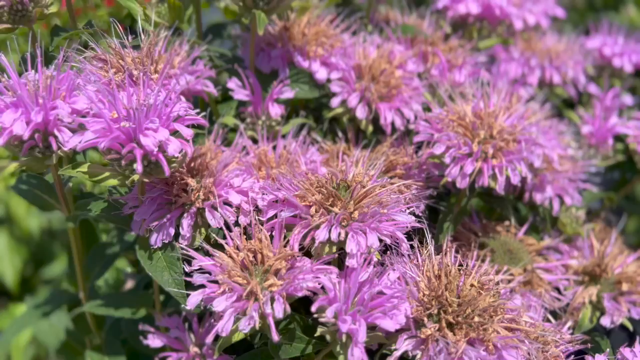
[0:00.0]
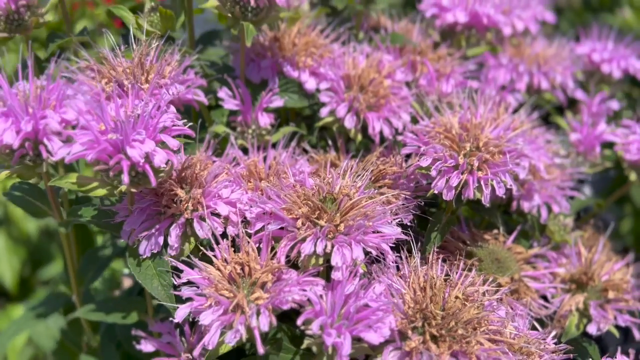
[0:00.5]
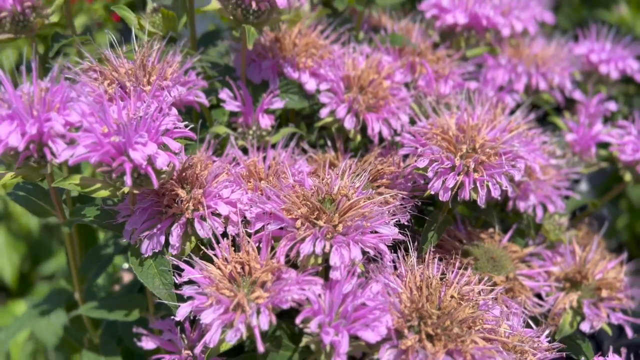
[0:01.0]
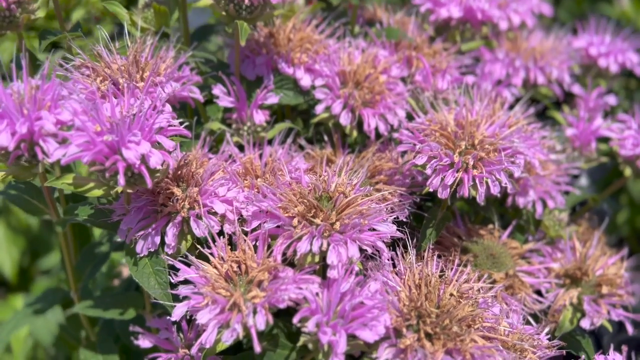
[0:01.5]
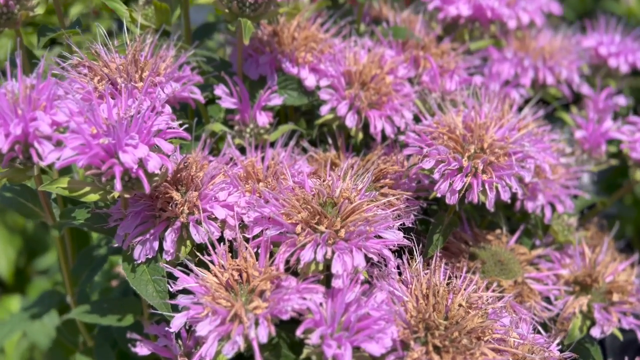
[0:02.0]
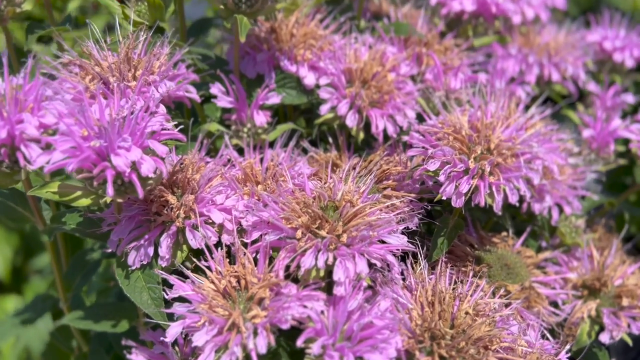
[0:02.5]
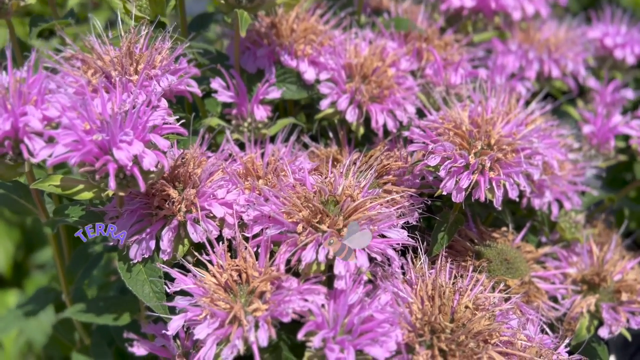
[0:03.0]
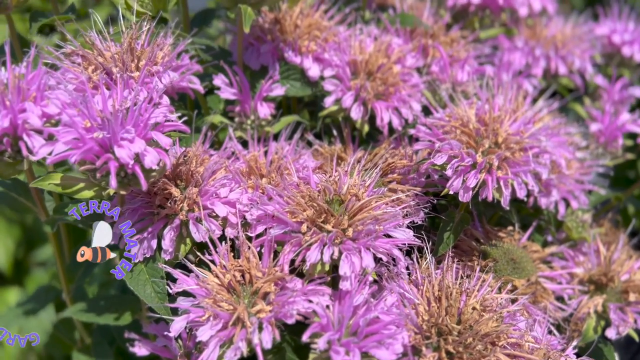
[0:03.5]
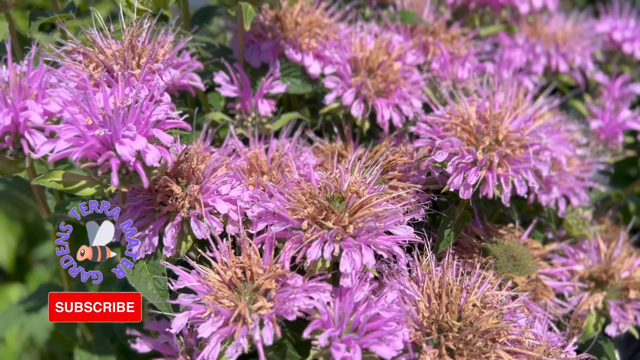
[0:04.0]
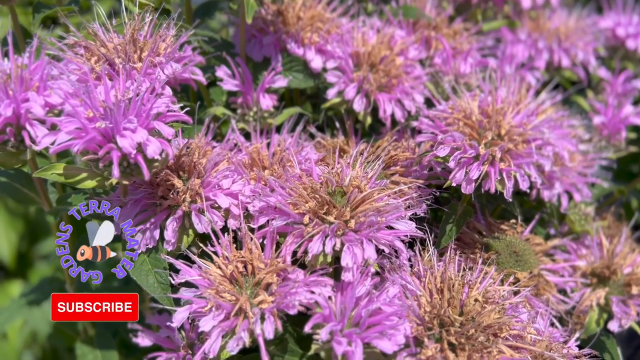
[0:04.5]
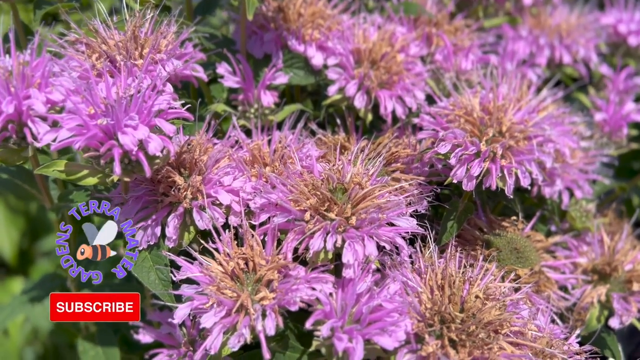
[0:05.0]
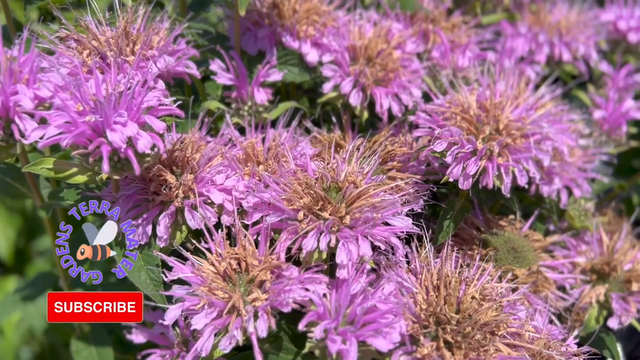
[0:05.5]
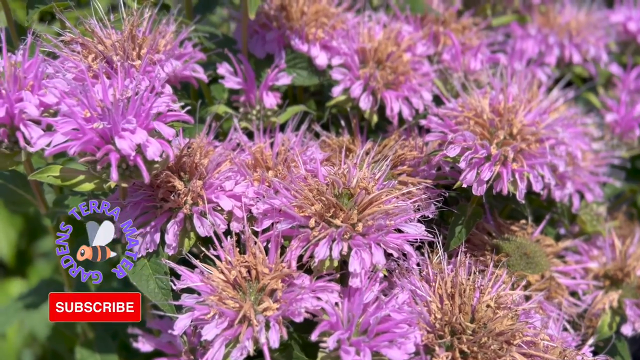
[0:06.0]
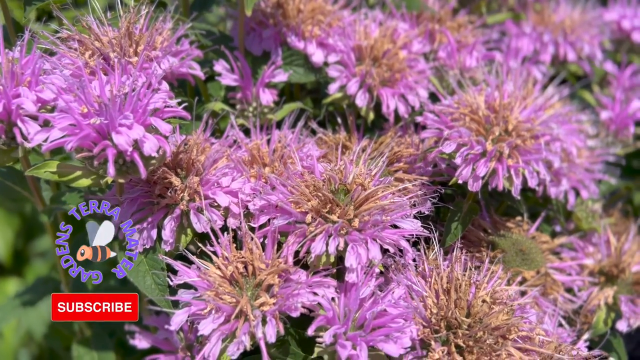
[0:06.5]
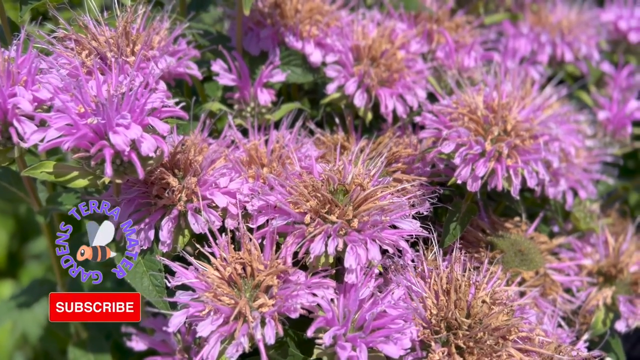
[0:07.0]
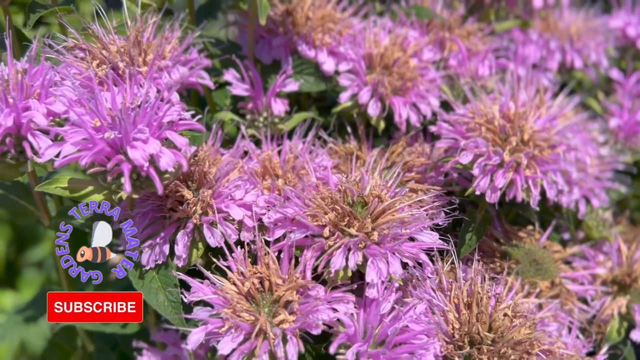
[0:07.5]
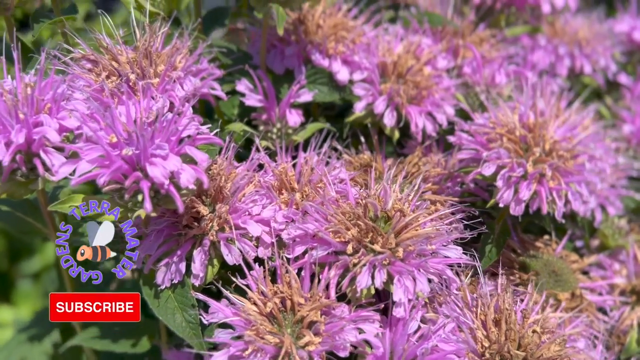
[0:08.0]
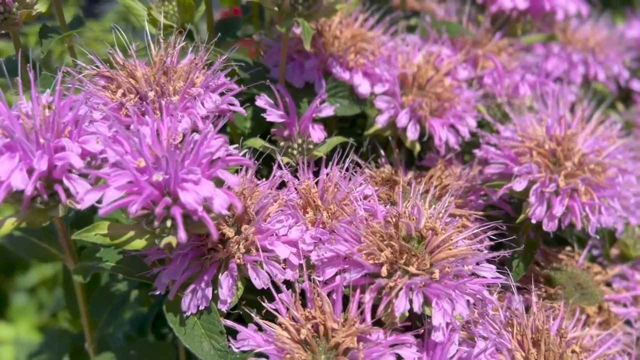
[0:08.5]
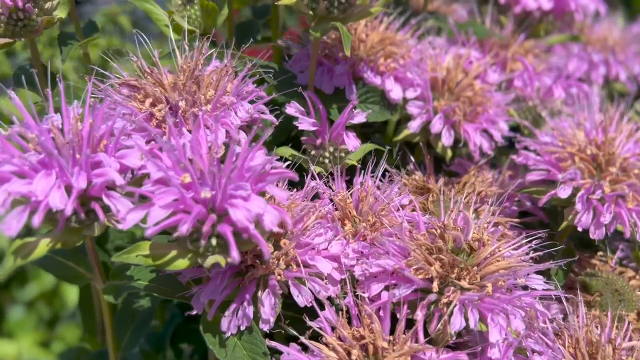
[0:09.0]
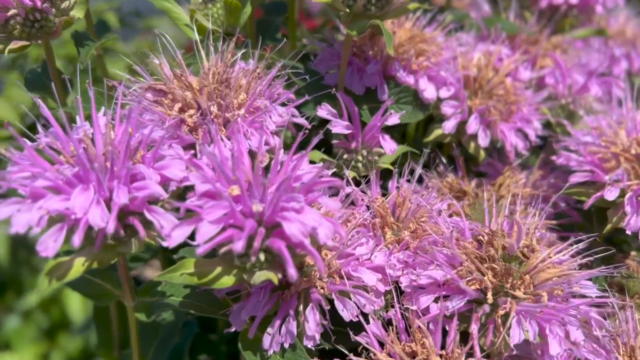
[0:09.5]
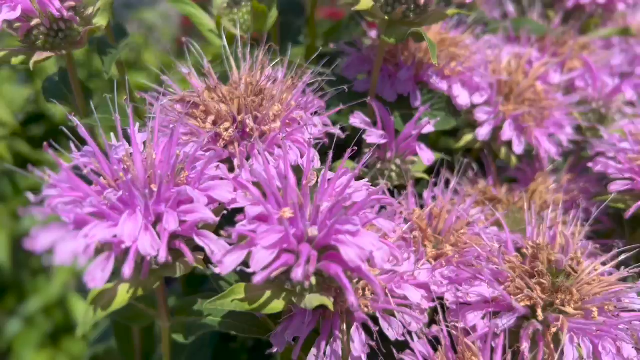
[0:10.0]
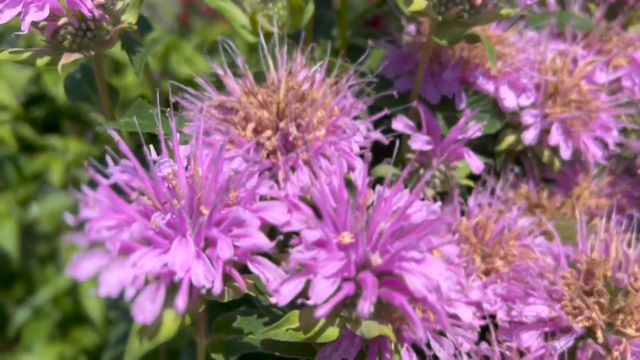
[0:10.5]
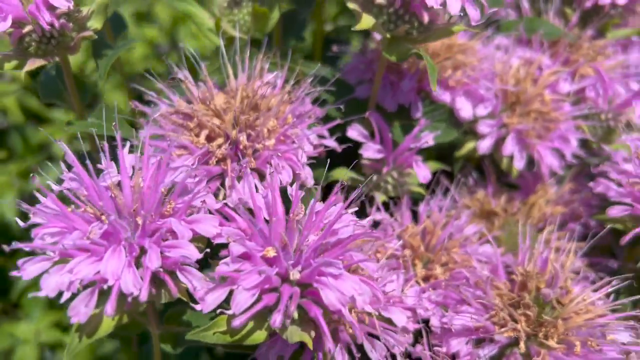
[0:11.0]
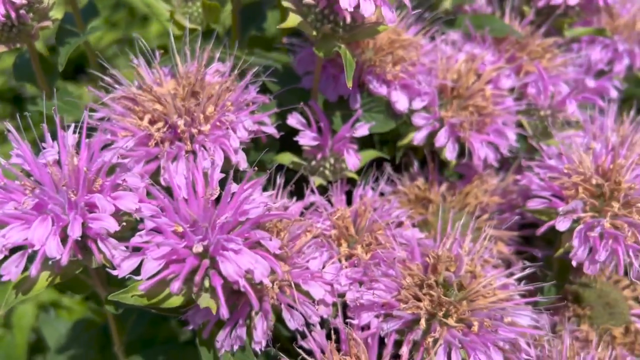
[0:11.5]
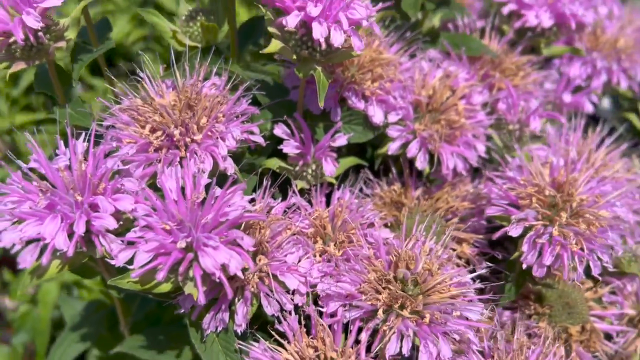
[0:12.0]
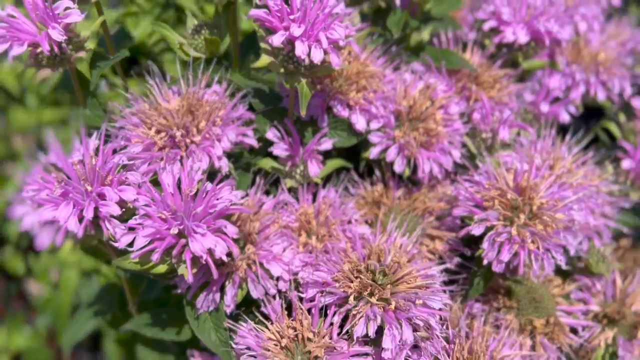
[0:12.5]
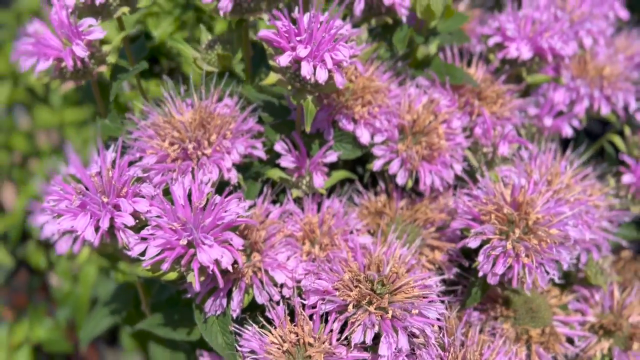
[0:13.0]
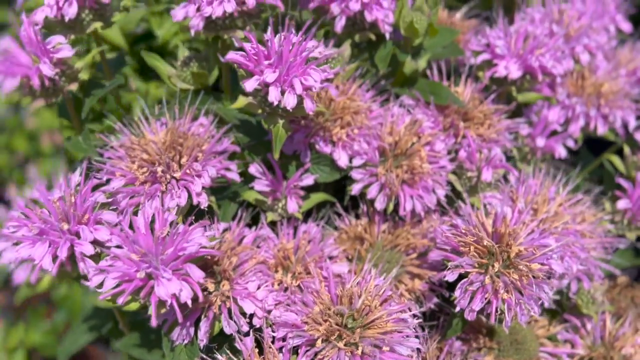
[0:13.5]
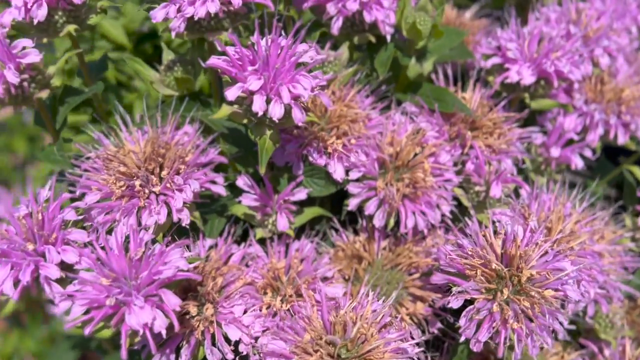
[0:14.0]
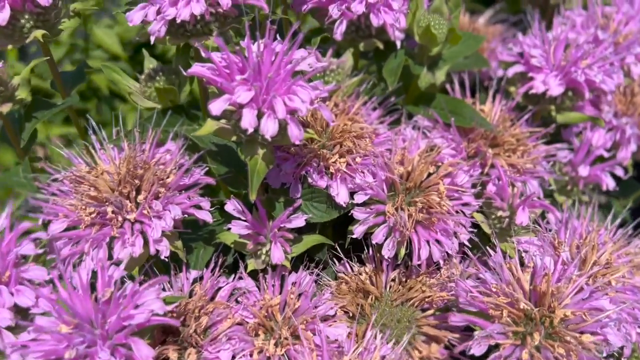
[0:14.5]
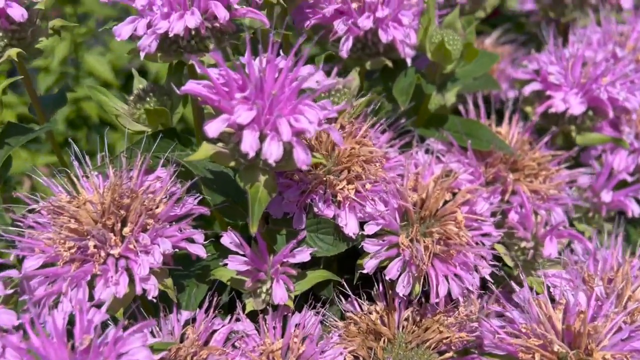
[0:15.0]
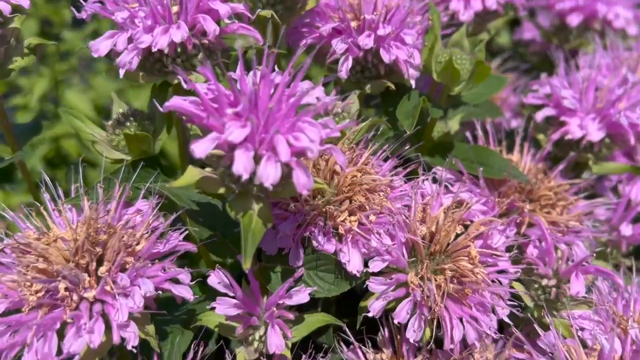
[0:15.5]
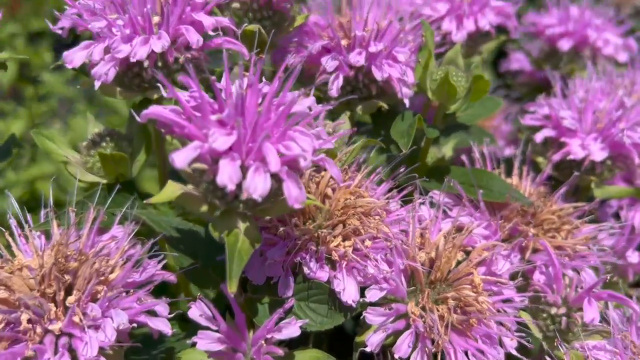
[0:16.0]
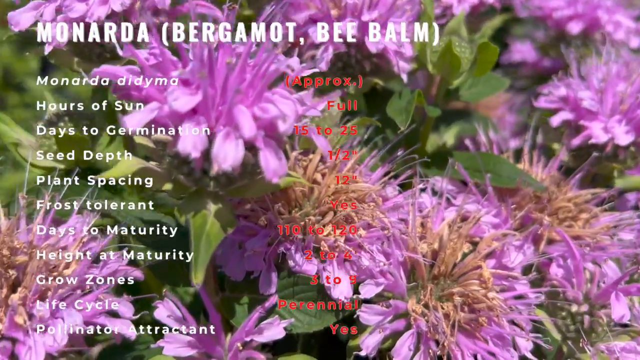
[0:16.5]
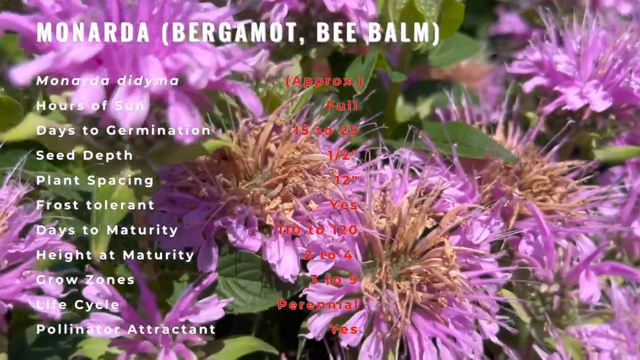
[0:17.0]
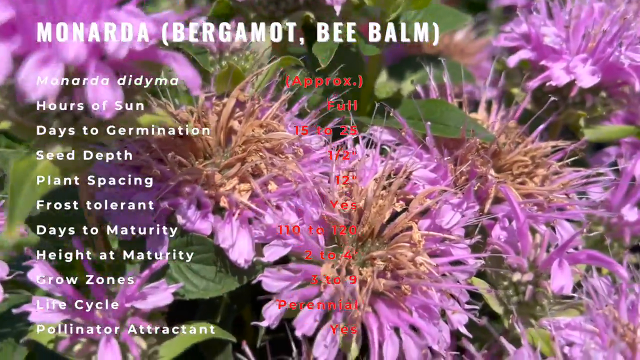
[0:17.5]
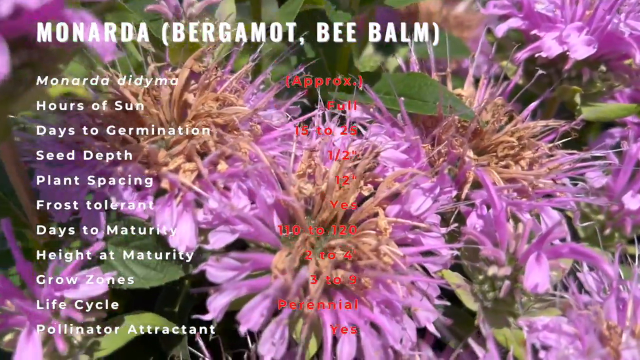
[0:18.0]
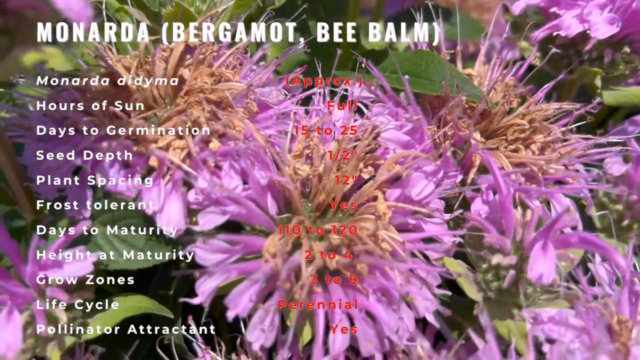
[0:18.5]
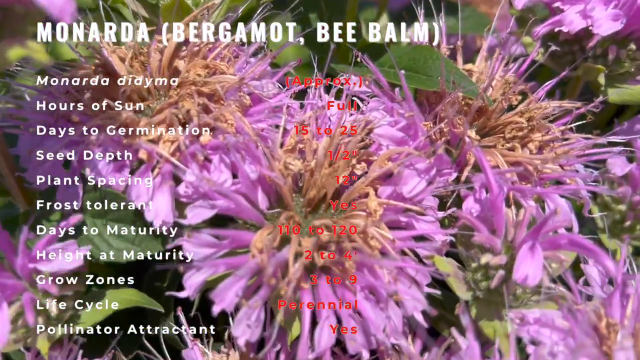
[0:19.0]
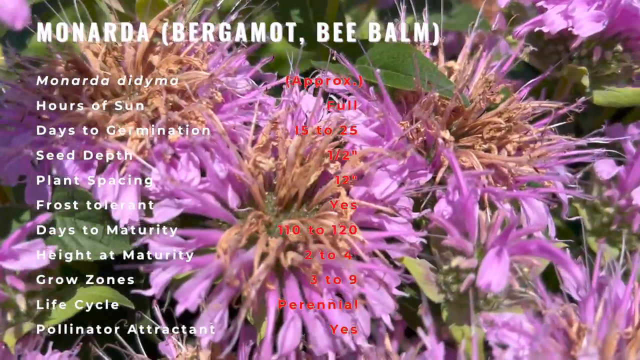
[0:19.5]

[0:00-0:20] Purple flowers grow in what seem to be clusters, with little twigs sticking out of them that look kind of orange and yellow and seem to be dried-out parts of the flower. The younger flowers are completely purple, probably even violet. A graphic on the screen says "Monarda" and shows the amount of hours the plant needs in the sun and days to germination, followed by "seed depth", "plant spacing", "frost tolerant", "days to maturity", "height at maturity" and "growth zones", forming a whole list. The plant has green leaves that are kind of small compared to the flowers, which look a lot bigger and mostly have a cluster of petals. As the flowers die out, they seem to turn brown from the middle first.